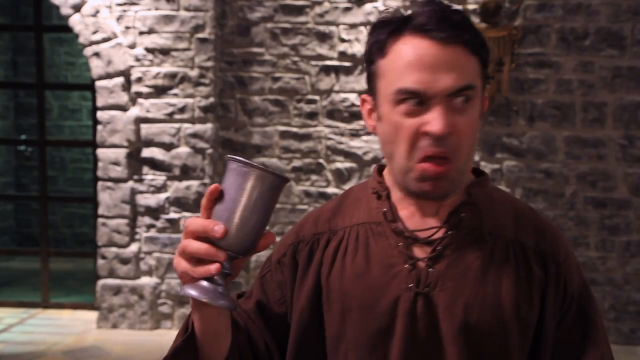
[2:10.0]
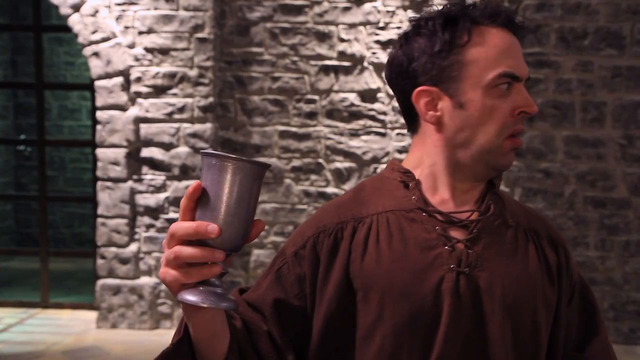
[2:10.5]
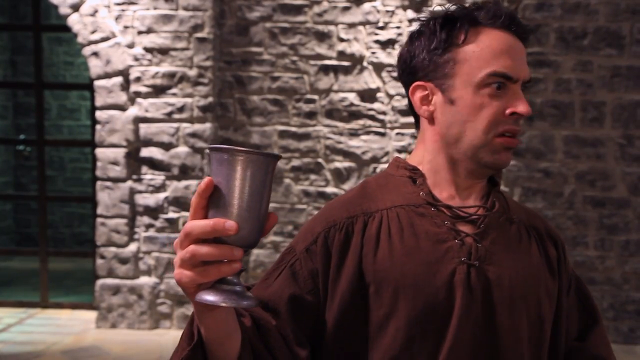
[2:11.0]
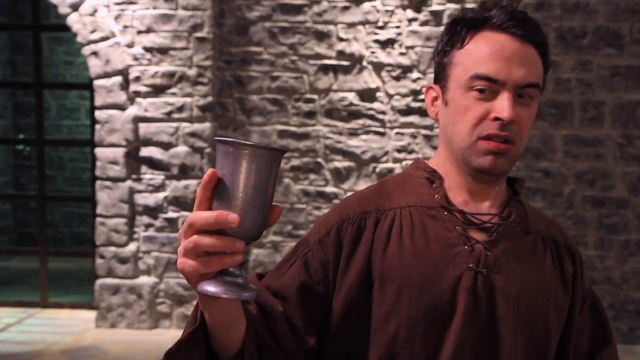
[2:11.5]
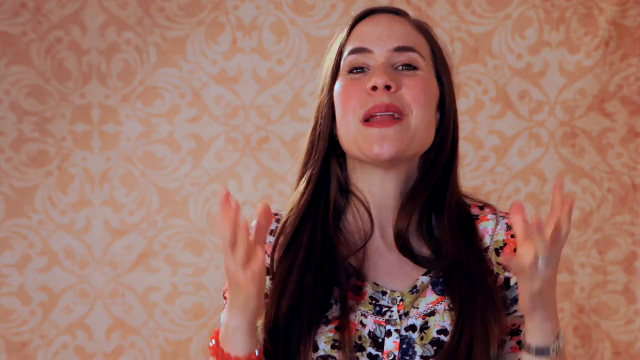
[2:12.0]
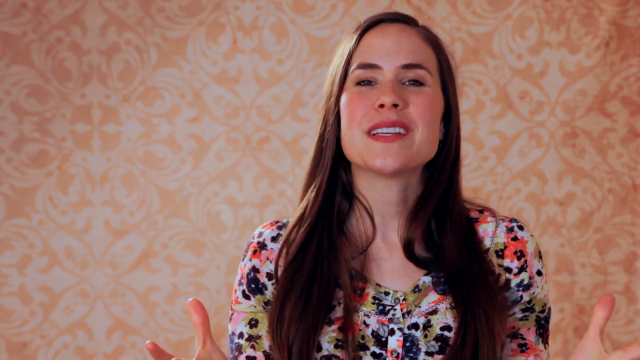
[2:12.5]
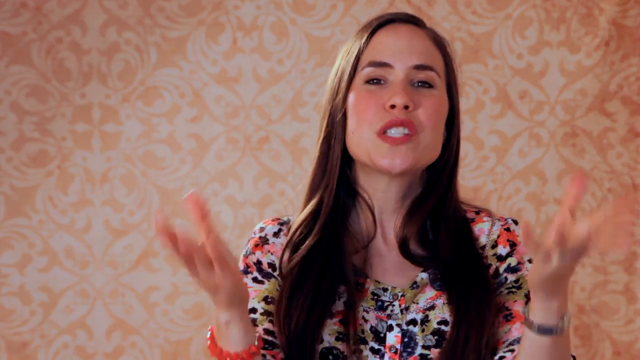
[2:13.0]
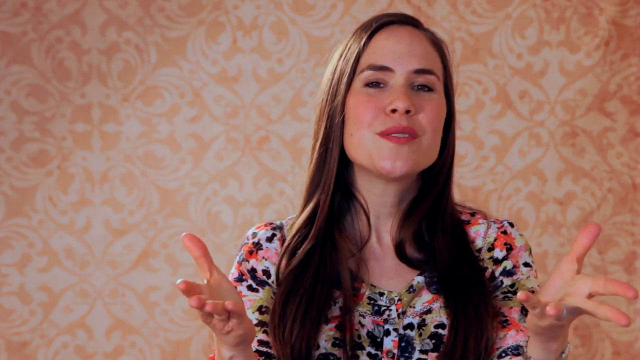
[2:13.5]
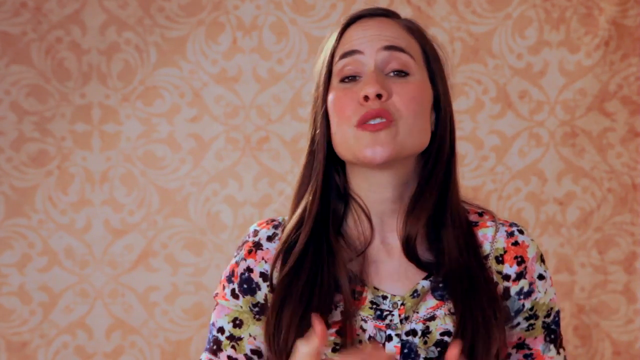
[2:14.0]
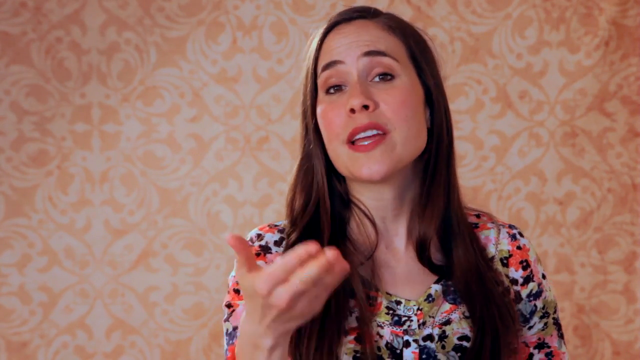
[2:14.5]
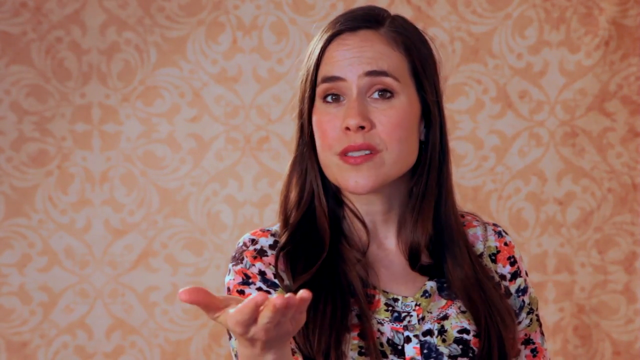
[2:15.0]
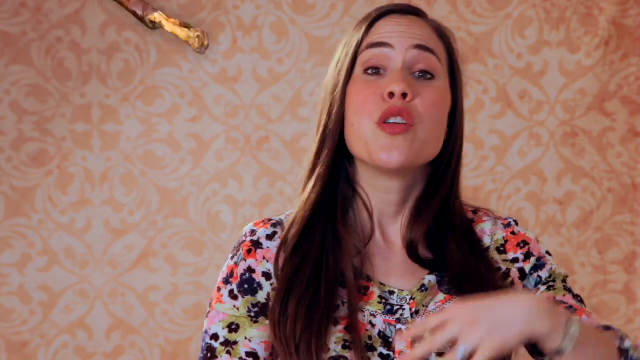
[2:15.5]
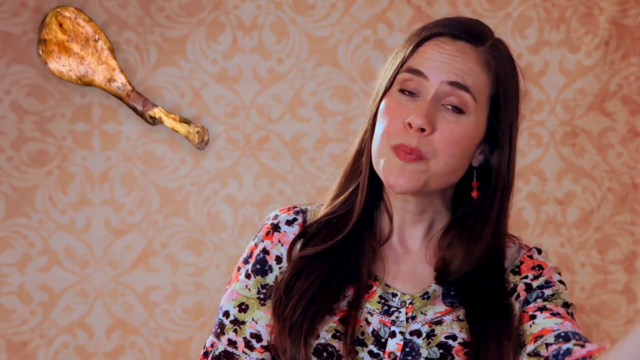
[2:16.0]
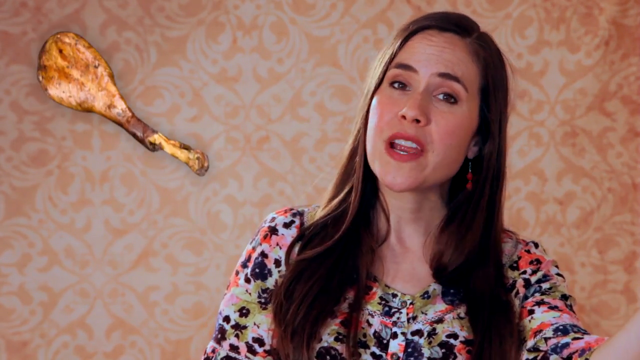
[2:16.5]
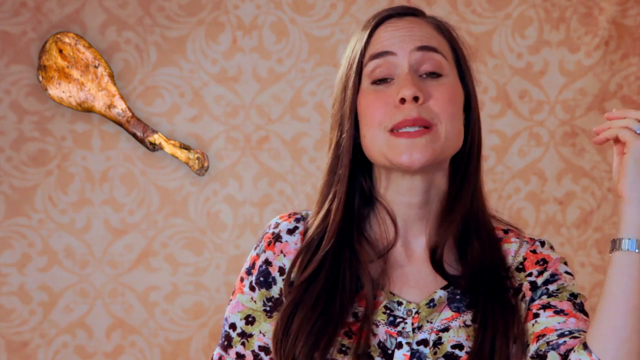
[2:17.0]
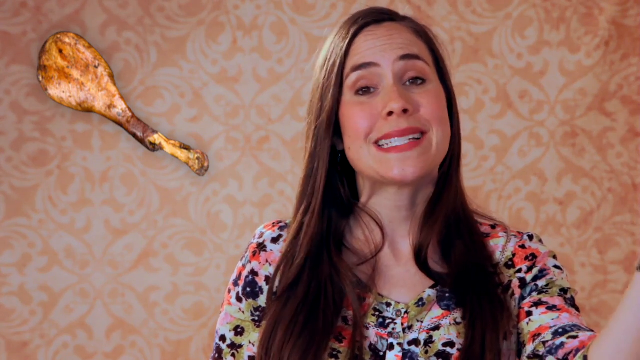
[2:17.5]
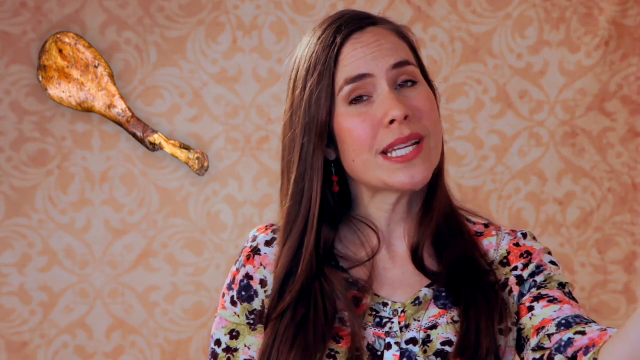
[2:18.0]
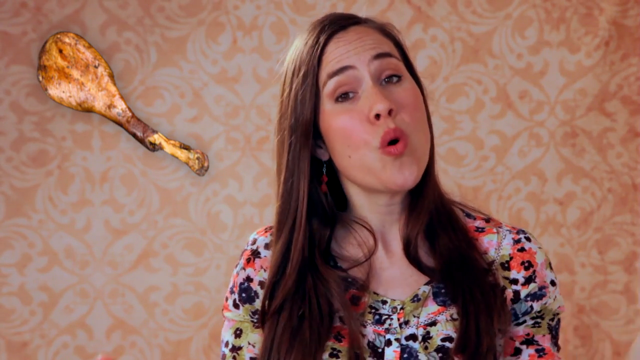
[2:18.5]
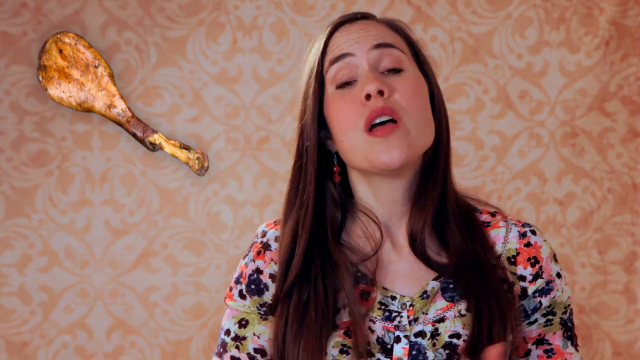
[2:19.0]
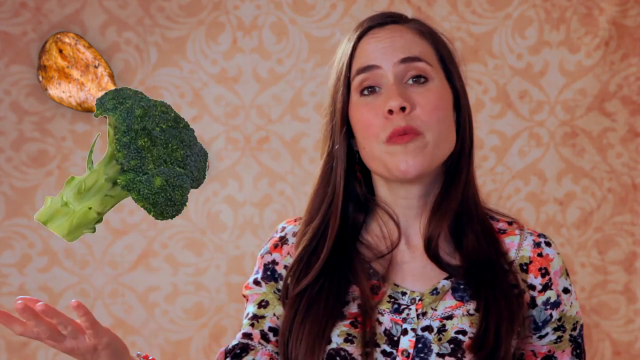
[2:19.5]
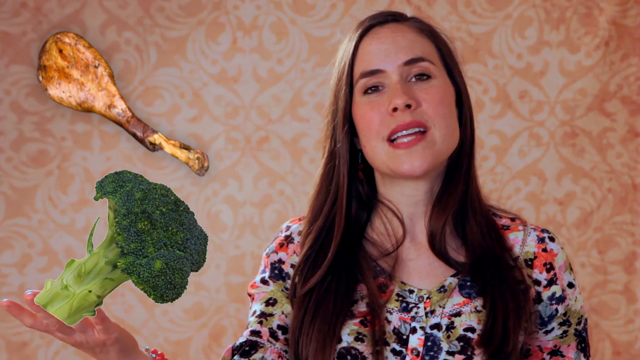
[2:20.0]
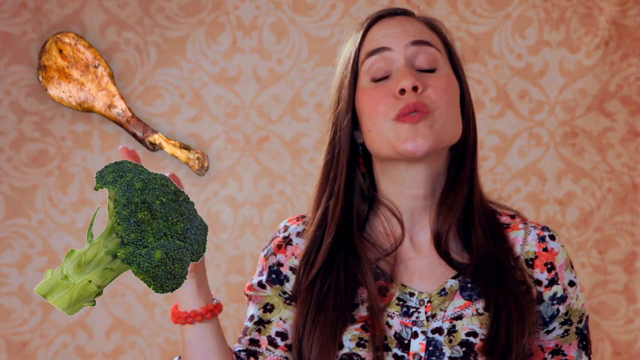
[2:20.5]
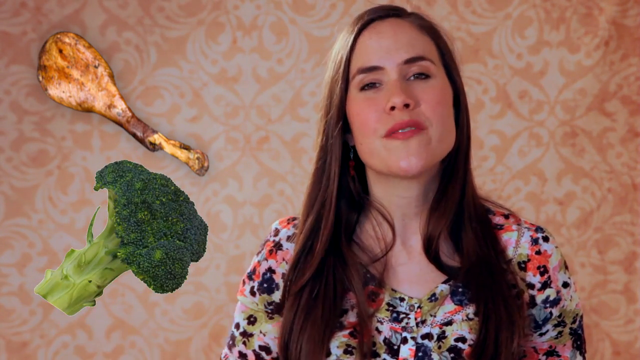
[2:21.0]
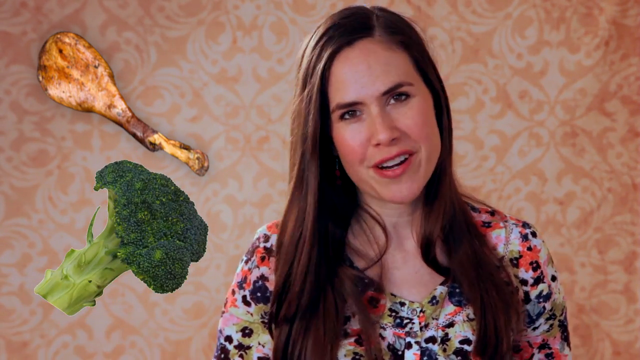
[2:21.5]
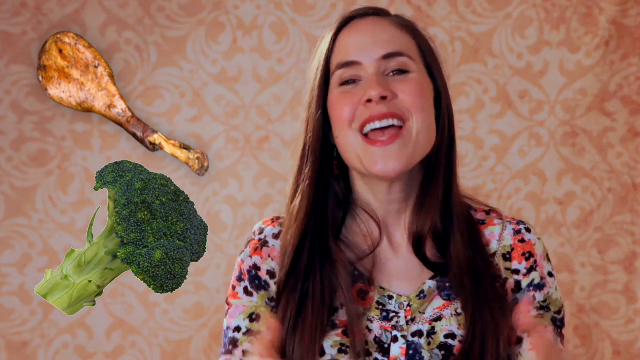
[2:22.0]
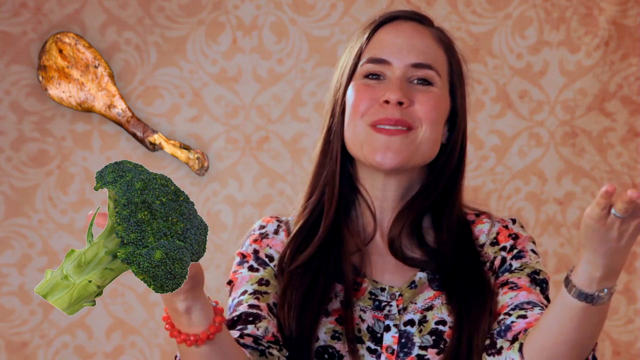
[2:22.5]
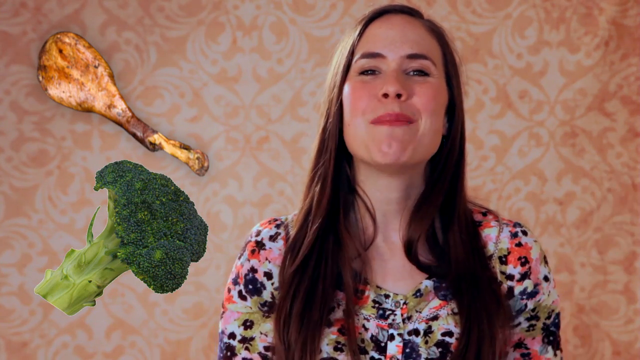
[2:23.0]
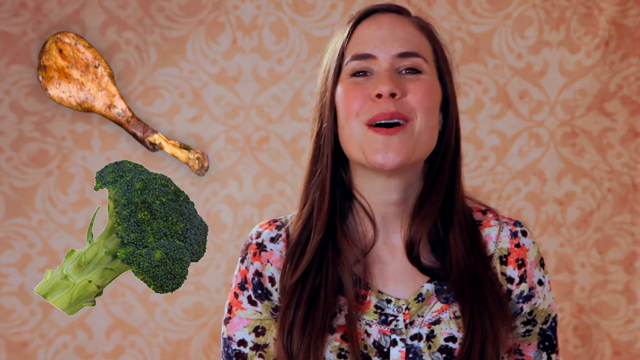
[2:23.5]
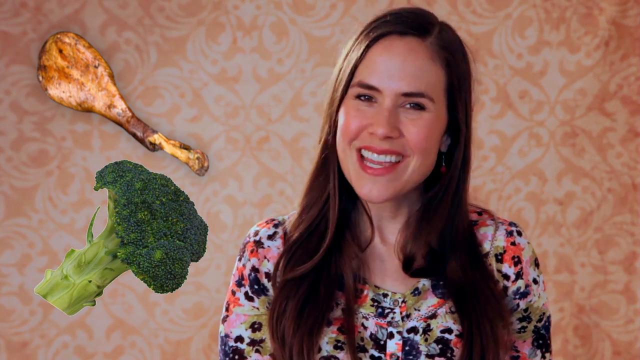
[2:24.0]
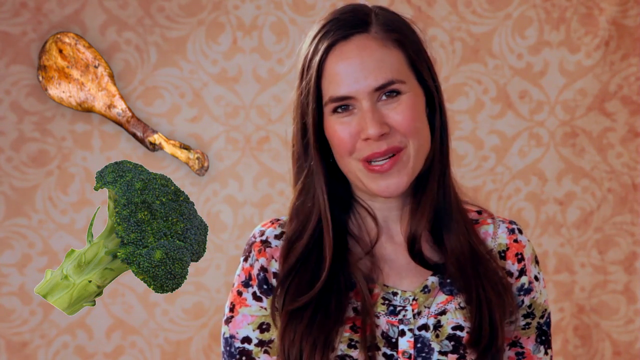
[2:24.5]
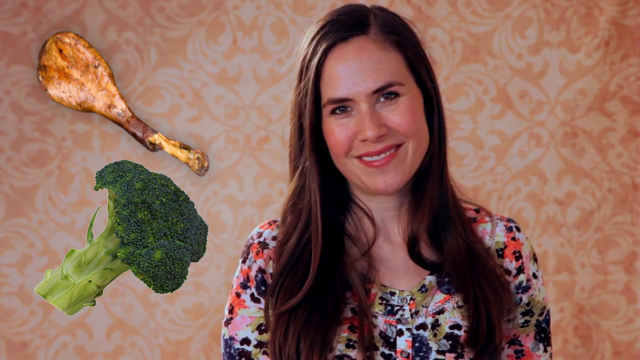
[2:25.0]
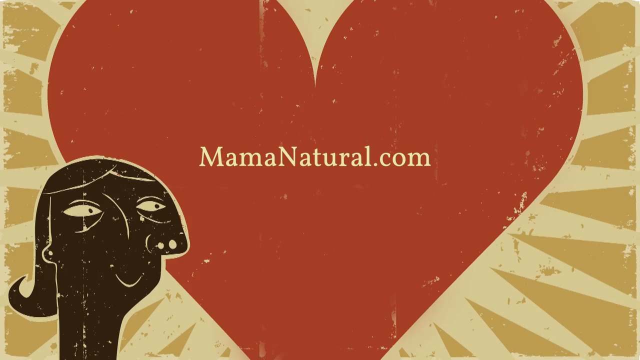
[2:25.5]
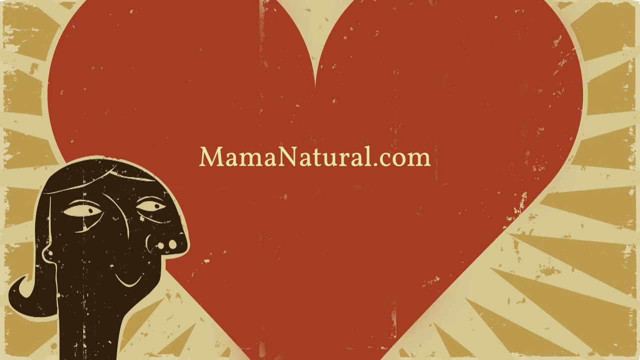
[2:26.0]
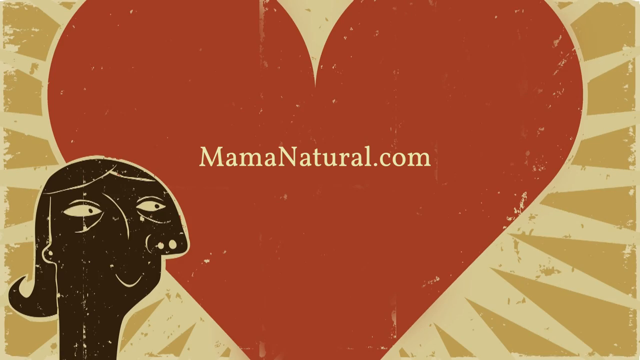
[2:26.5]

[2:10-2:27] The man in the peasant outfit in the castle basement smells the goblet and then looks away, disliking the smell. The video returns to the woman in modern attire, who continues talking at the camera with many hand gestures. An image of a chicken drumstick and then a sprout of broccoli come in on the screen to her right and bounce a little, as if animated with a transition. The video then returns to the screen with the red heart, the golden background and the drawing of a person in the left-hand corner, which now says just "mamanatural.com". The woman, talking to the camera, looks very excited and gestures toward the camera with both hands.